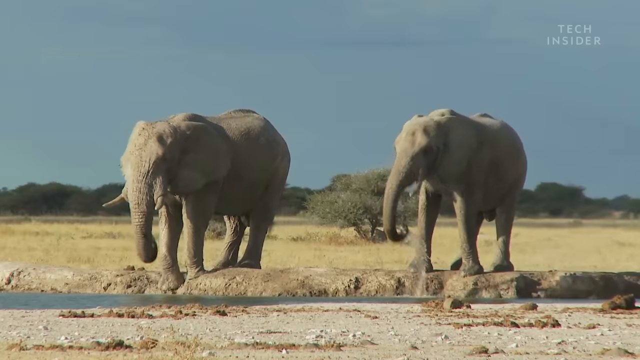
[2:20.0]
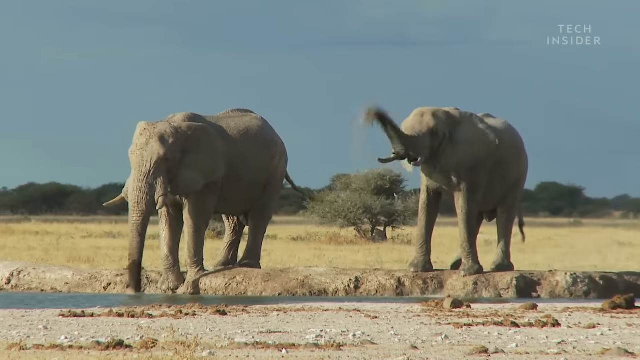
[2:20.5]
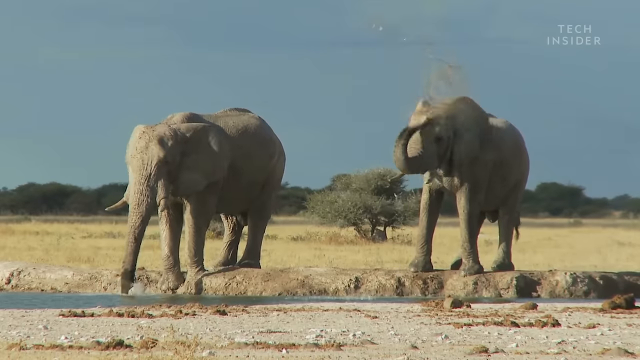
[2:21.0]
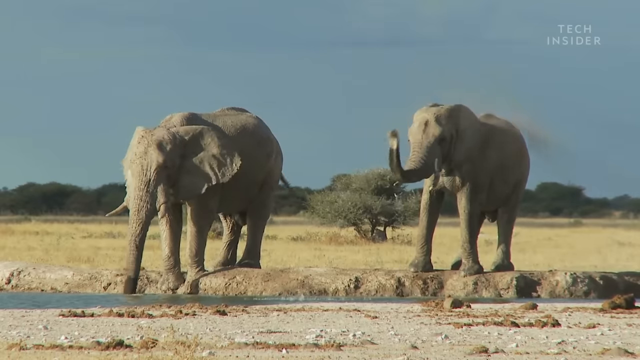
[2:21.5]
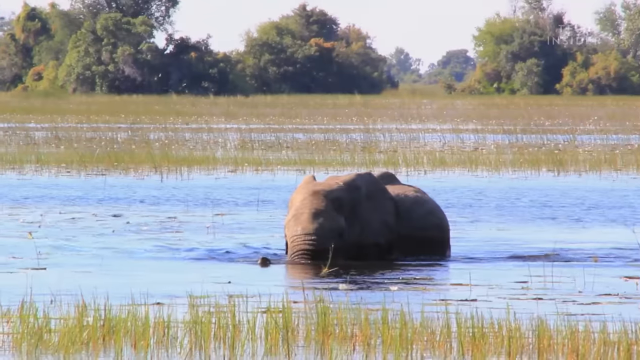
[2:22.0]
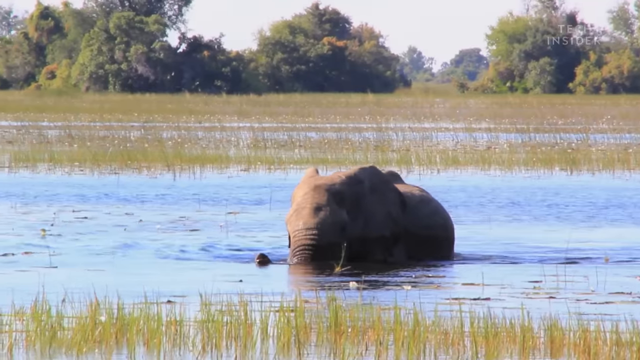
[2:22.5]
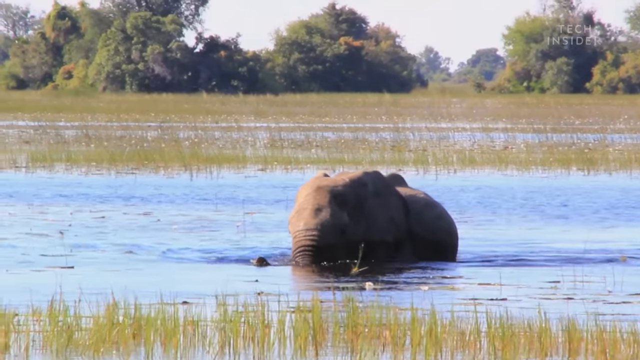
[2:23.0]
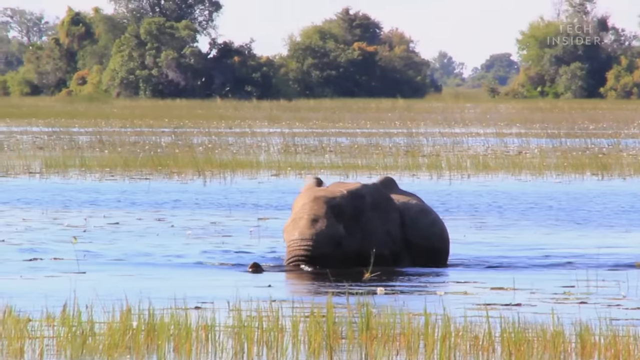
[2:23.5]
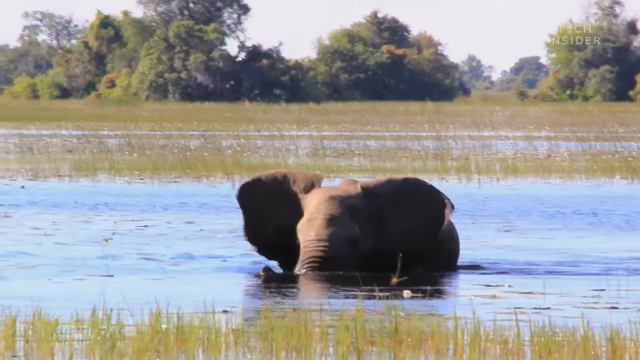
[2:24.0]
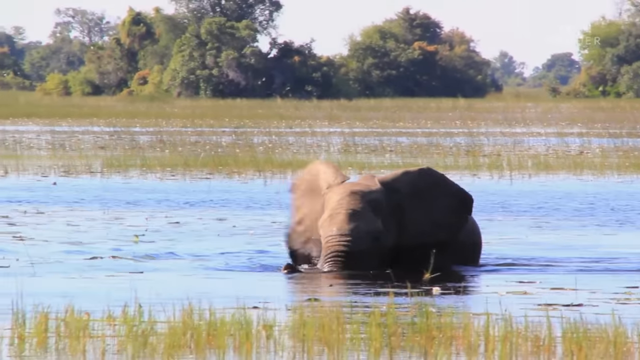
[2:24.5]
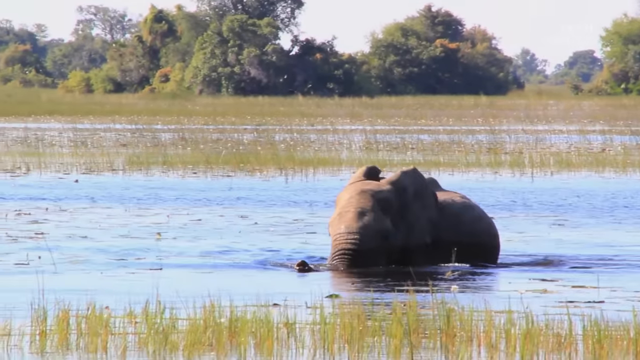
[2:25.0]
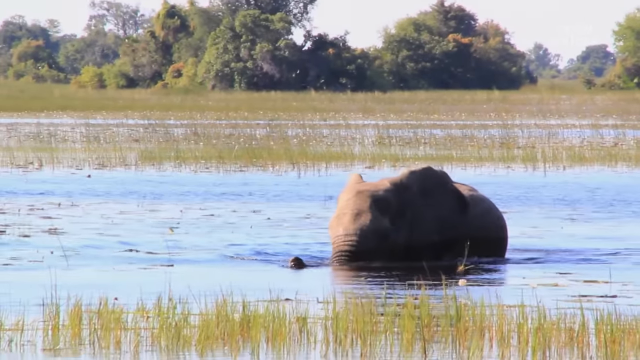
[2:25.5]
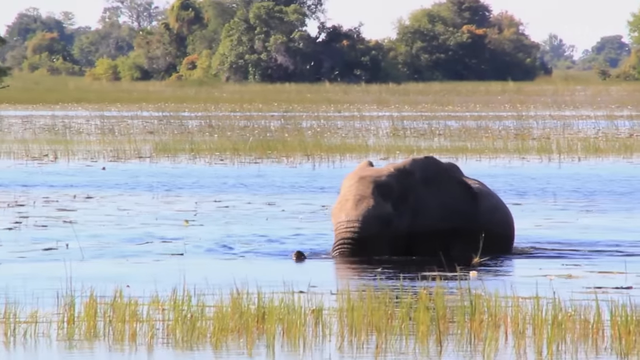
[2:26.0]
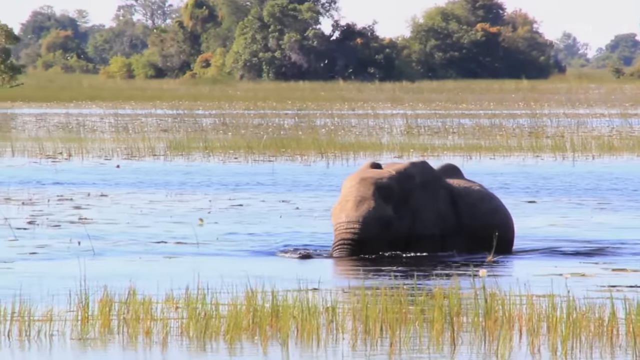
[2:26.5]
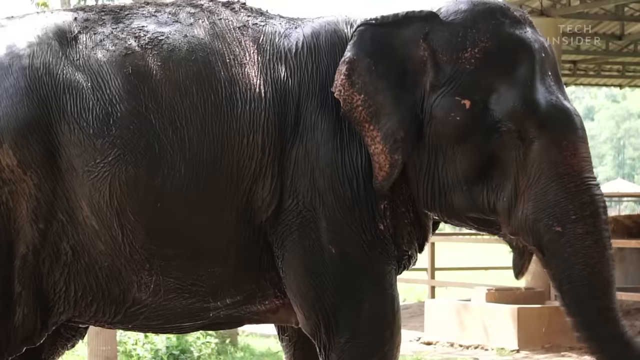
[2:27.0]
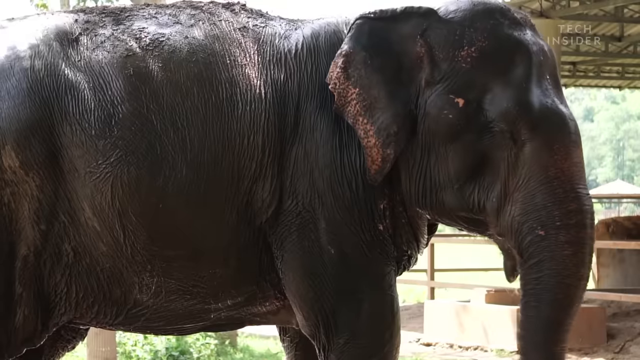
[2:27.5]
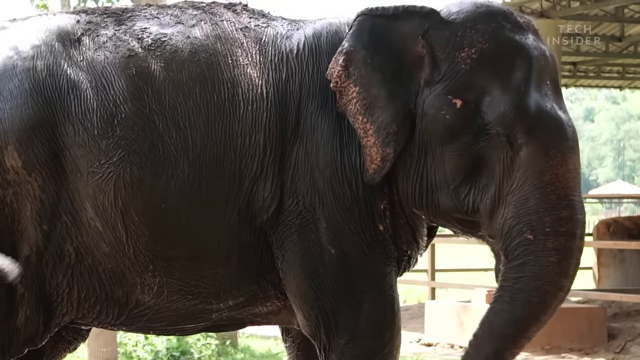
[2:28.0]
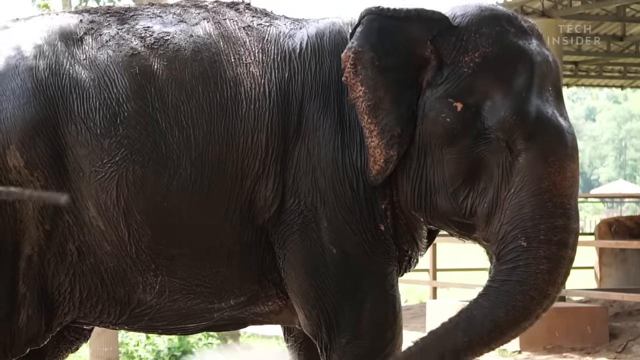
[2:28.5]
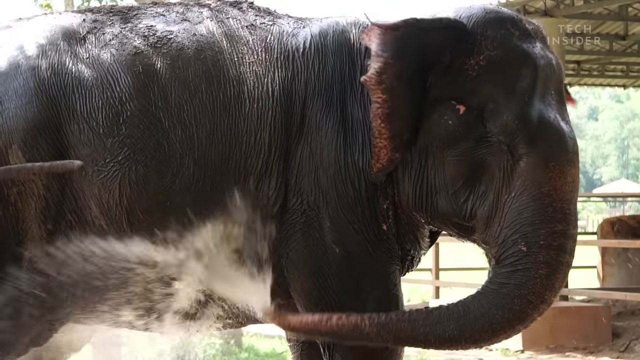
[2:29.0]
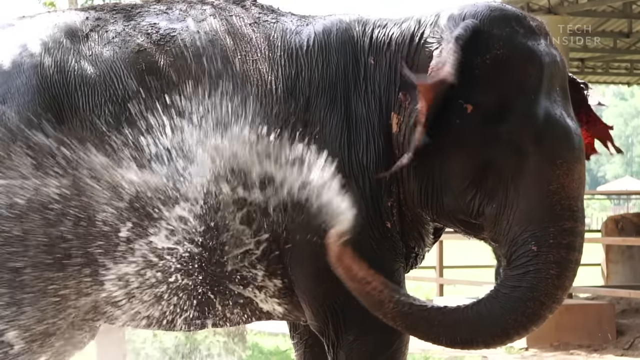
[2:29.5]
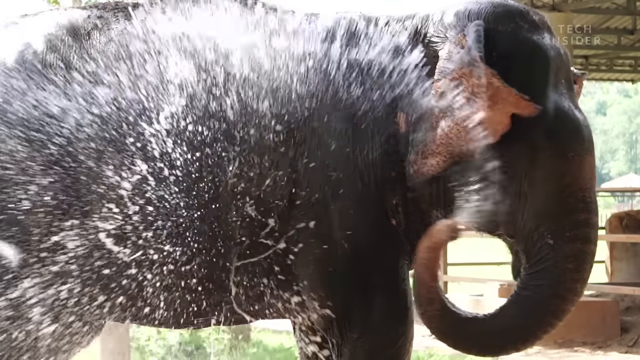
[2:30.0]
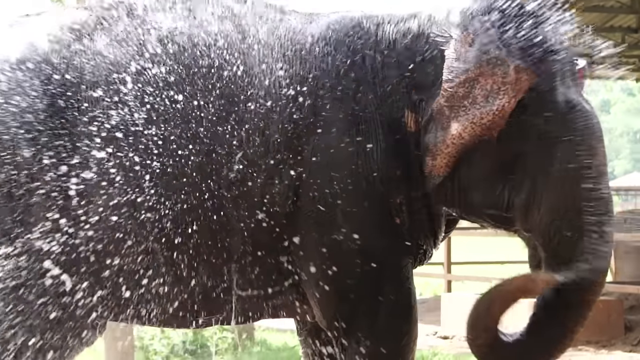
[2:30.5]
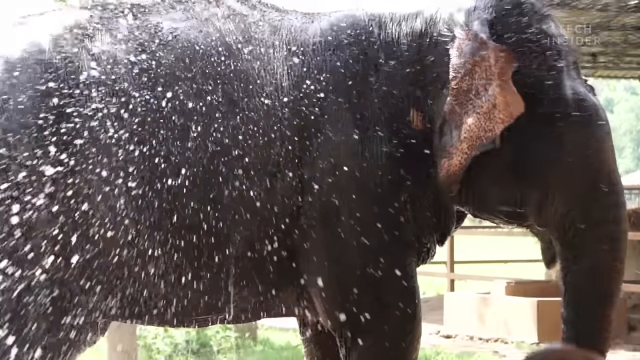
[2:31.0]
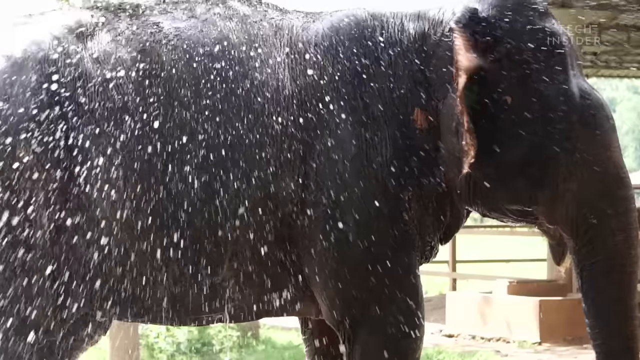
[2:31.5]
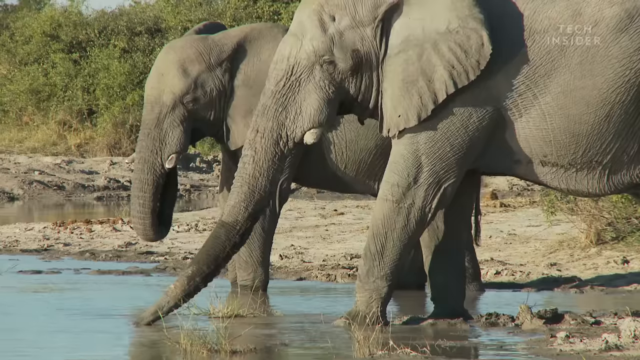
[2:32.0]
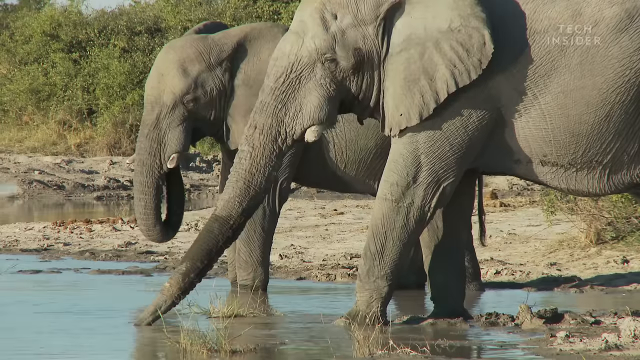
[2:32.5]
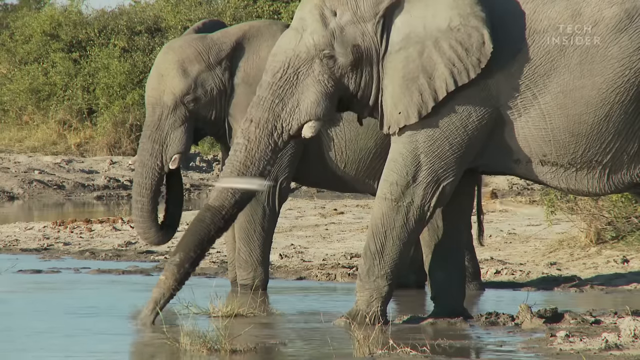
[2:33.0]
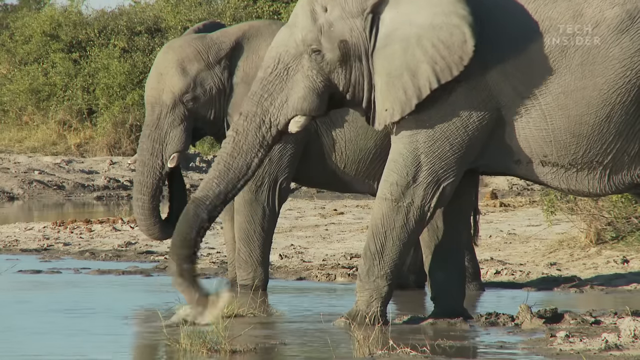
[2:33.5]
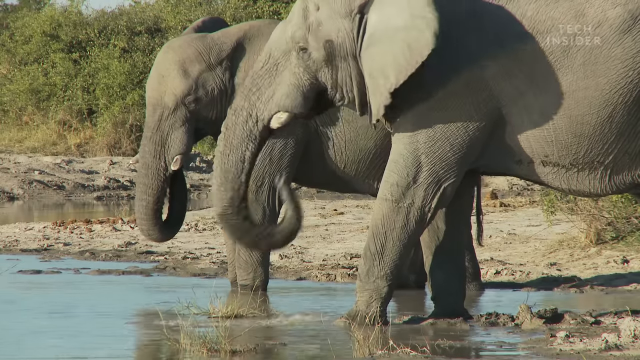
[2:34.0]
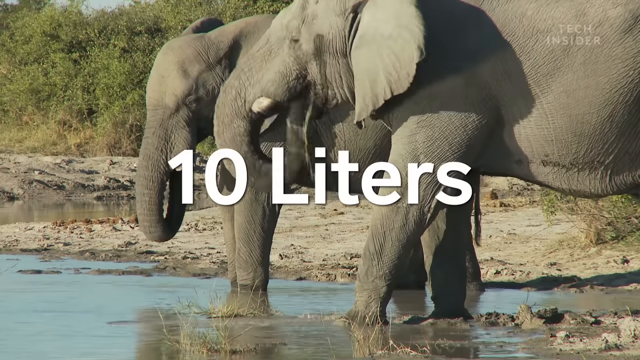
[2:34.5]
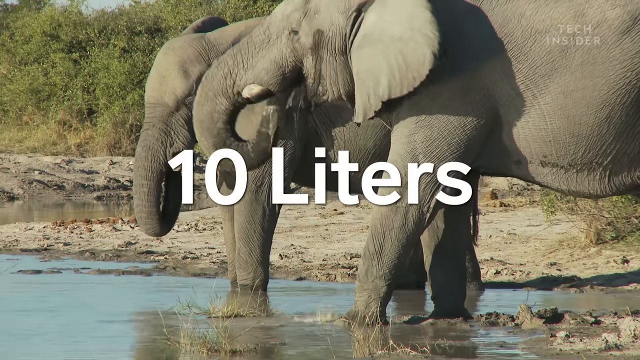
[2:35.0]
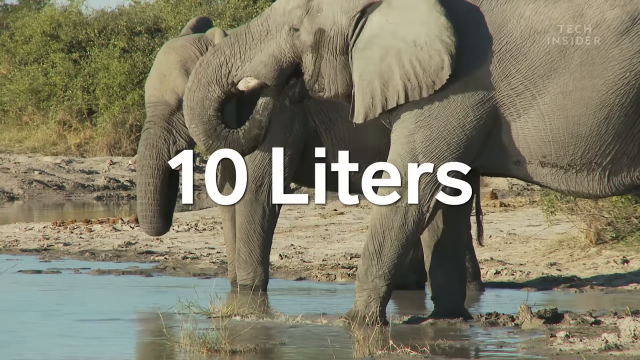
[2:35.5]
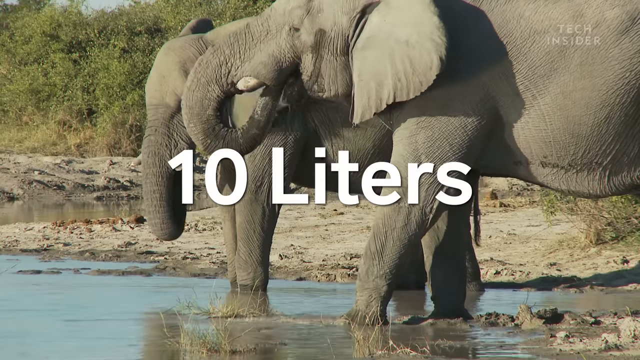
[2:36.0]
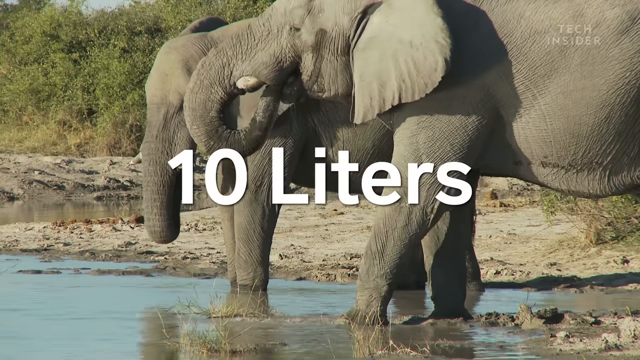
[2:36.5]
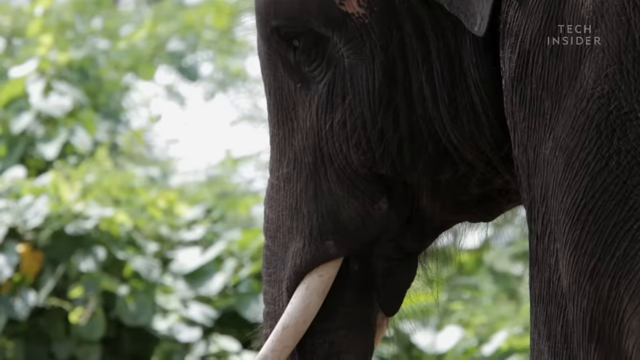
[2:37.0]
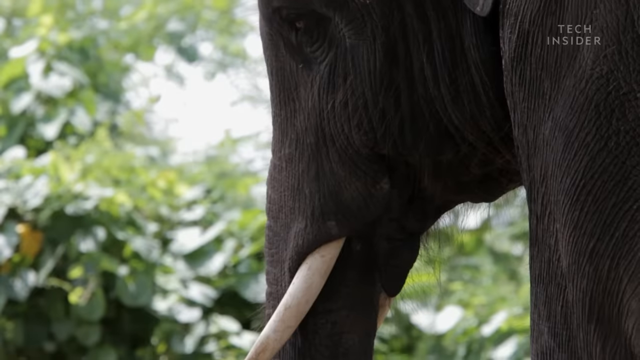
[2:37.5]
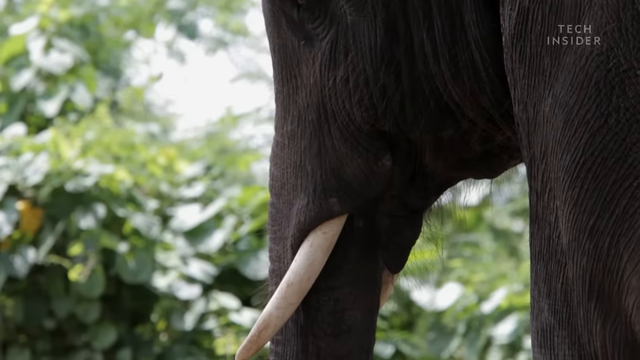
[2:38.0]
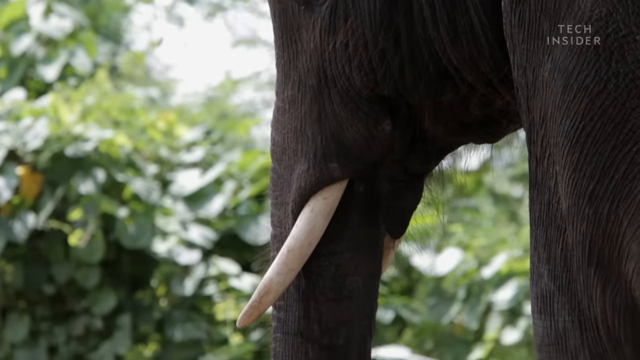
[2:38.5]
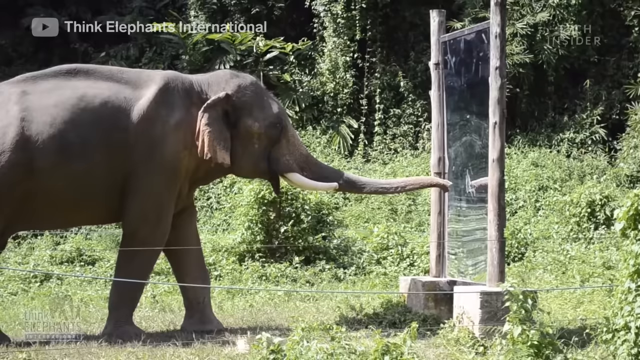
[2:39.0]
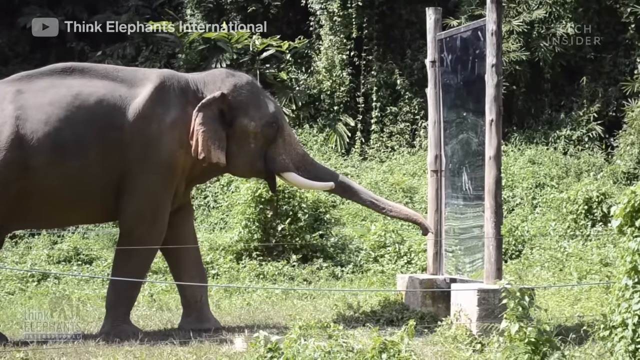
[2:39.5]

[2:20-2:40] Two elephants are together, and one puts dirt on itself. Another walks through water, and another is apparently washing itself with water. Two more drink, and "10 litres" appears. Another elephant is almost in front of a mirror-like surface. A dark elephant appears, apparently covered in water. The final elephant faces a mirror with its trunk extended and seems to want to touch it.